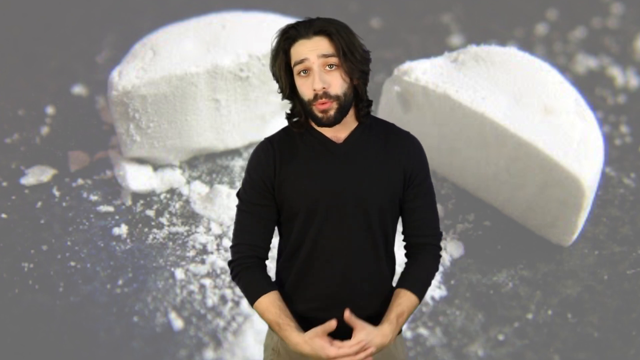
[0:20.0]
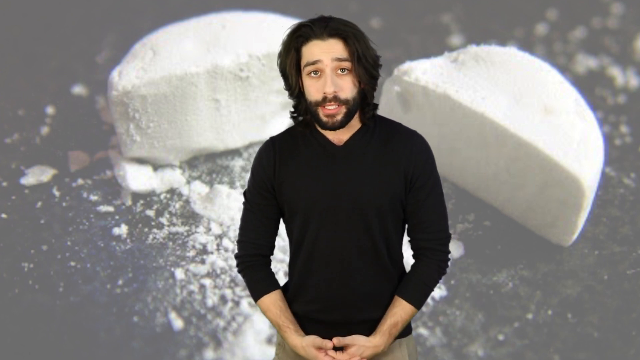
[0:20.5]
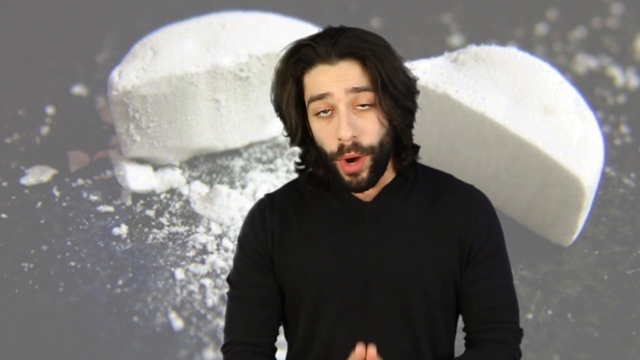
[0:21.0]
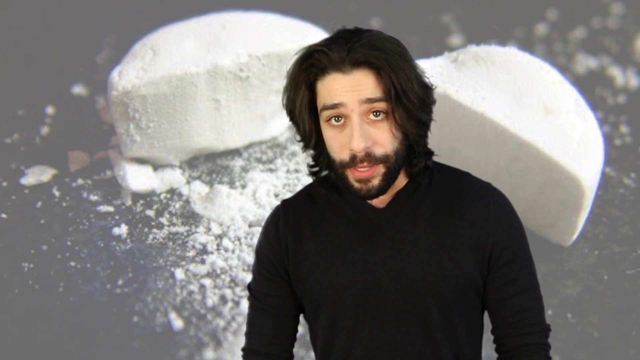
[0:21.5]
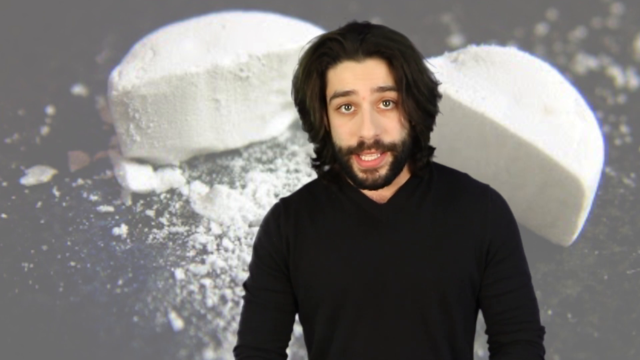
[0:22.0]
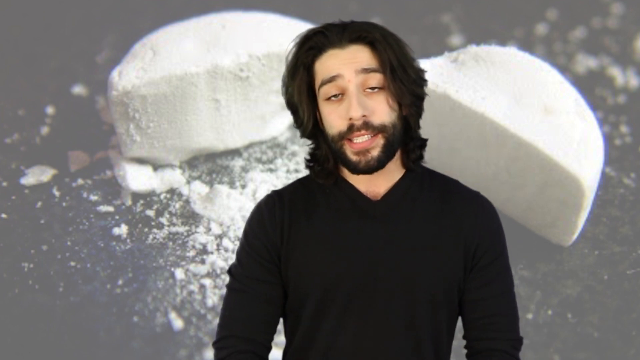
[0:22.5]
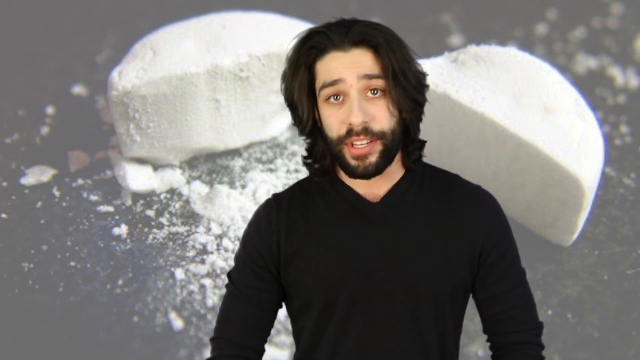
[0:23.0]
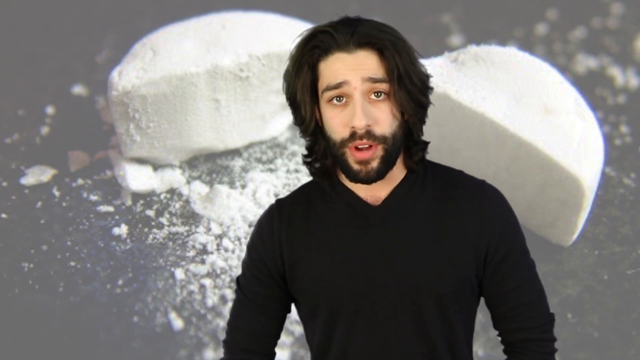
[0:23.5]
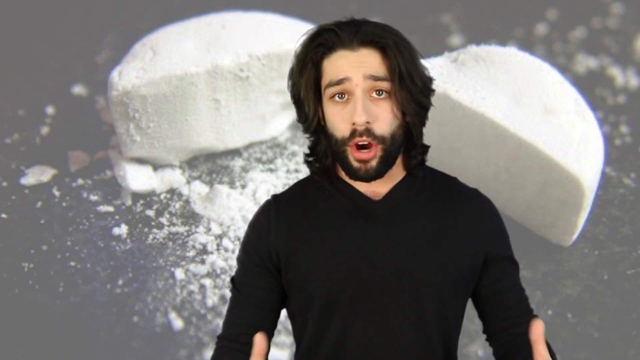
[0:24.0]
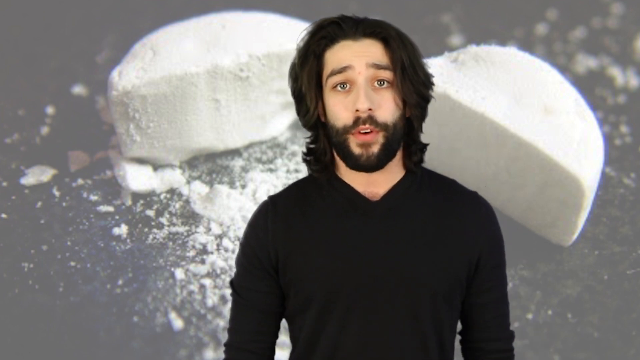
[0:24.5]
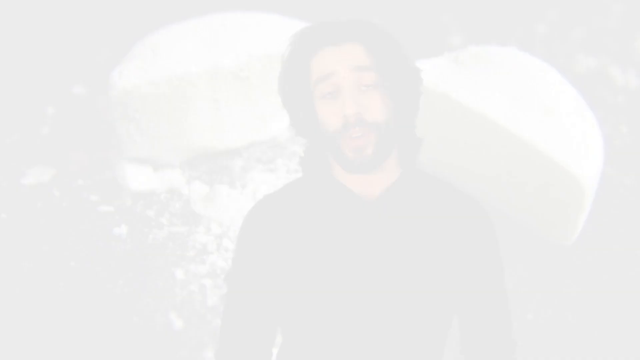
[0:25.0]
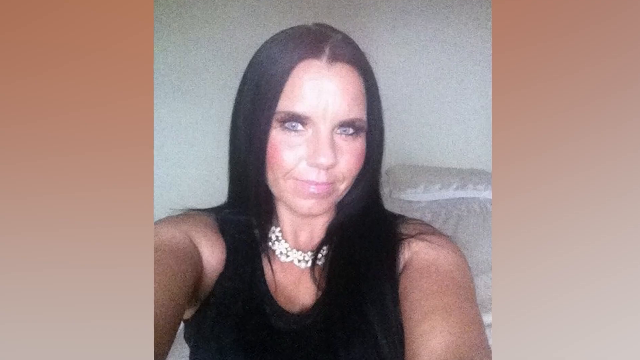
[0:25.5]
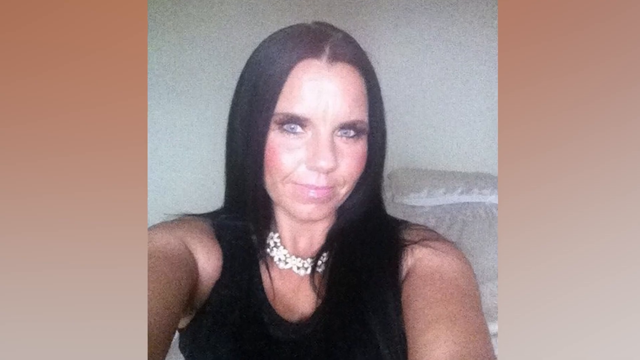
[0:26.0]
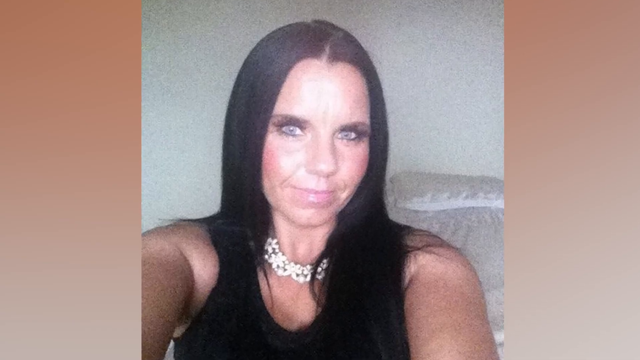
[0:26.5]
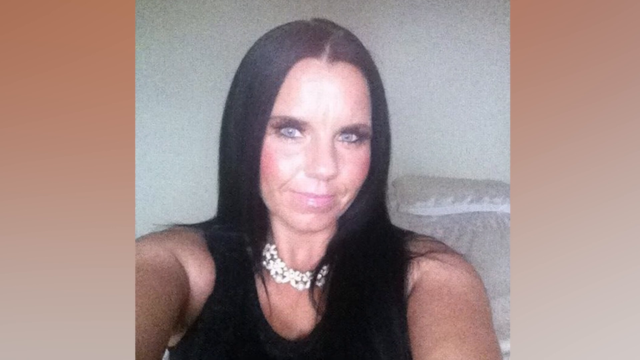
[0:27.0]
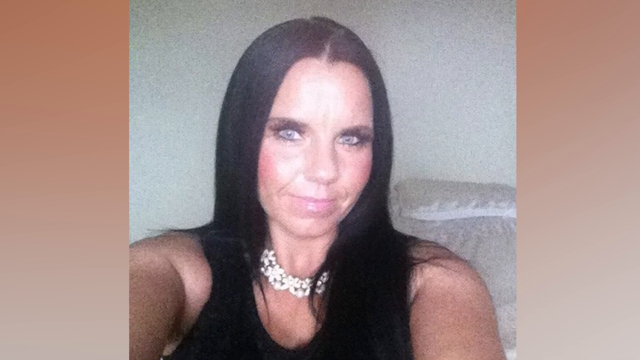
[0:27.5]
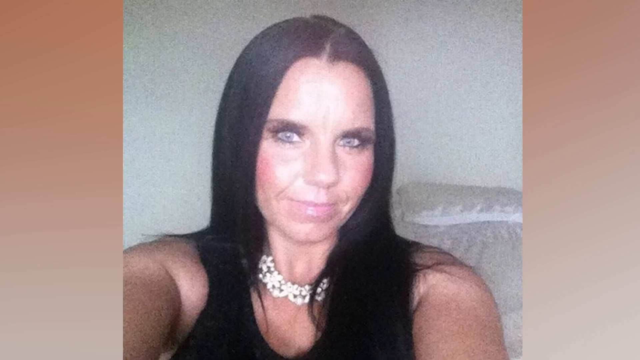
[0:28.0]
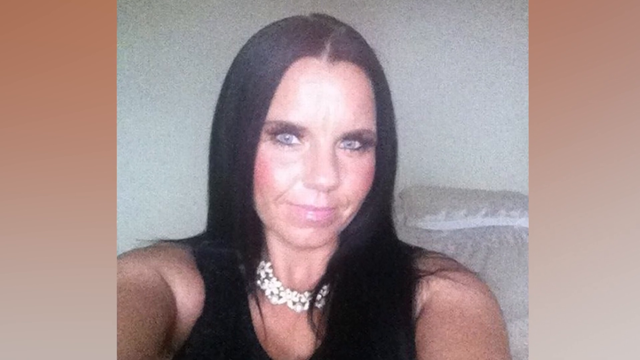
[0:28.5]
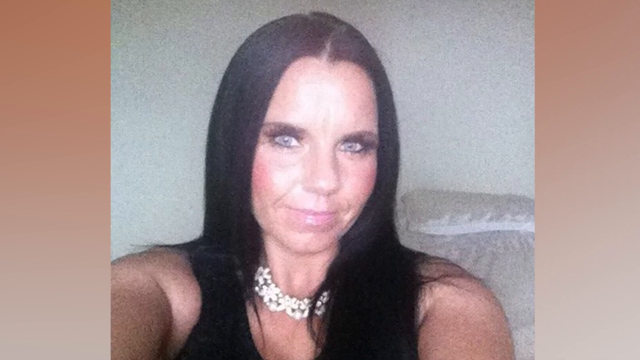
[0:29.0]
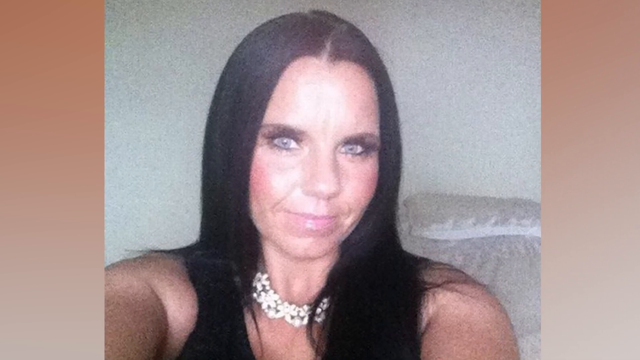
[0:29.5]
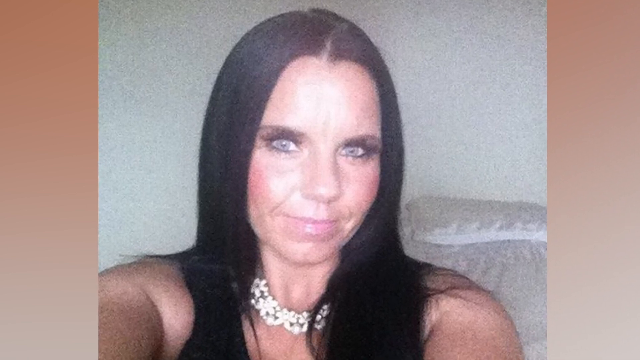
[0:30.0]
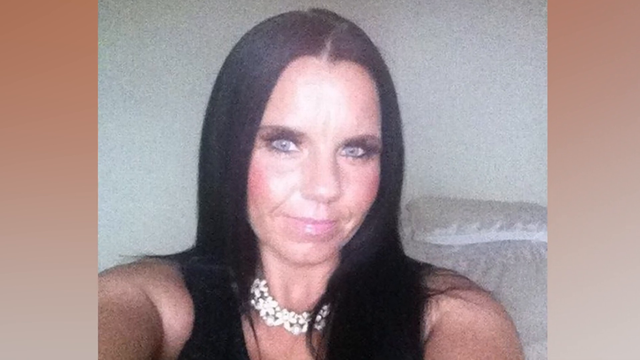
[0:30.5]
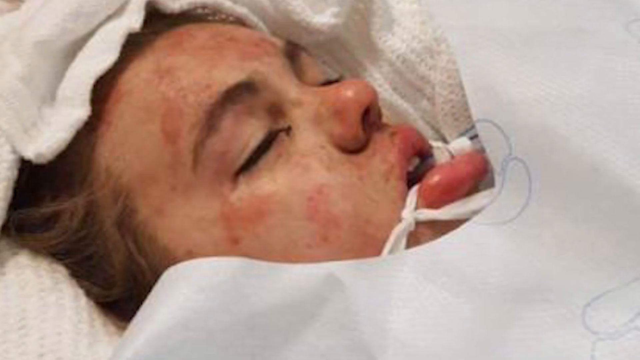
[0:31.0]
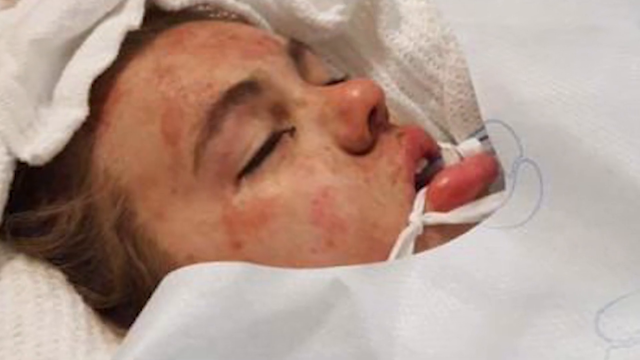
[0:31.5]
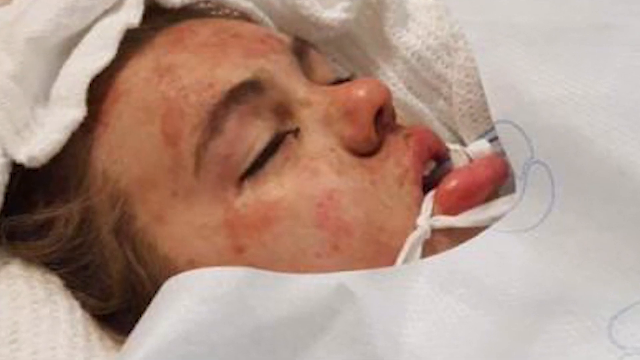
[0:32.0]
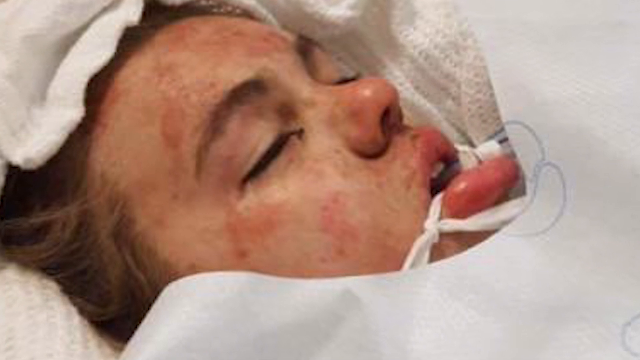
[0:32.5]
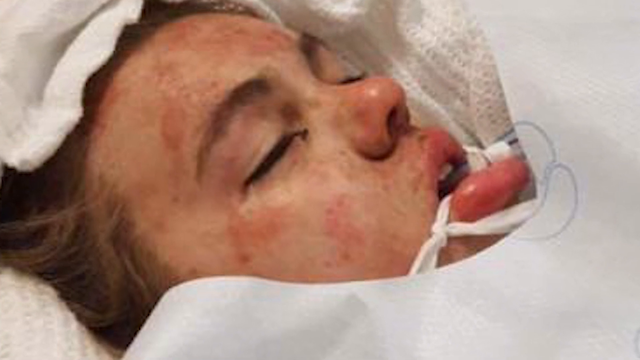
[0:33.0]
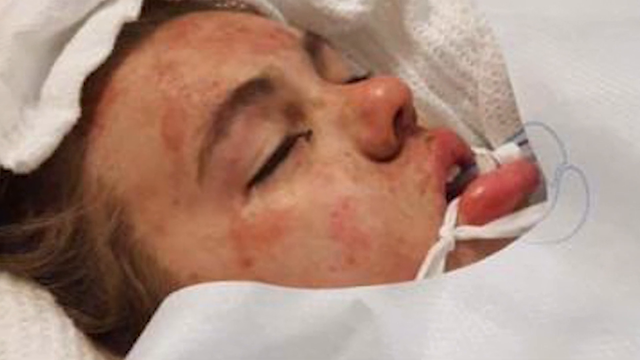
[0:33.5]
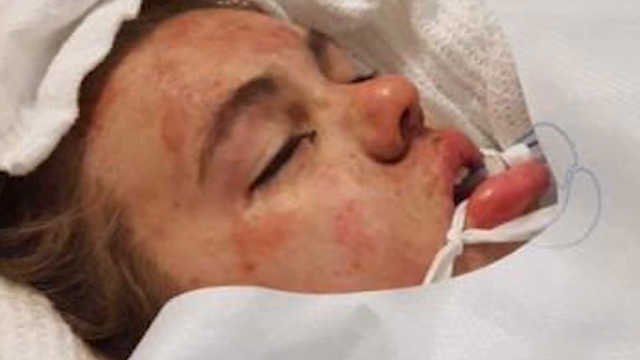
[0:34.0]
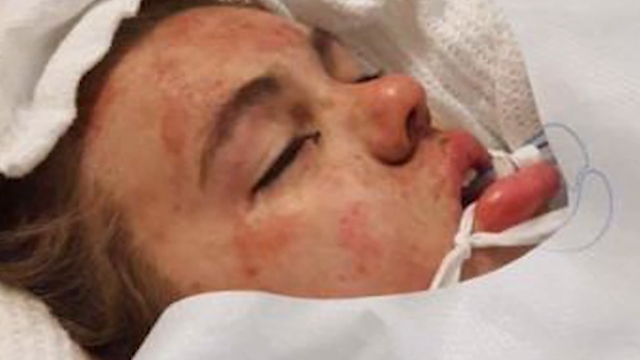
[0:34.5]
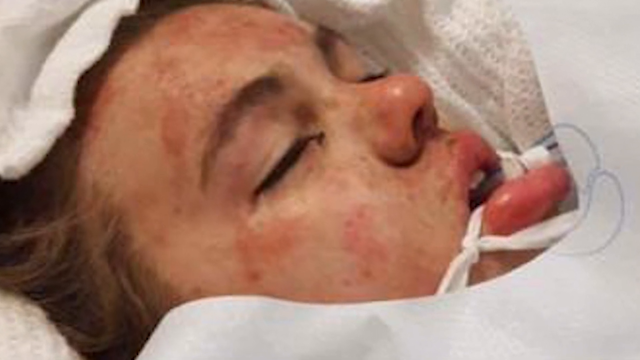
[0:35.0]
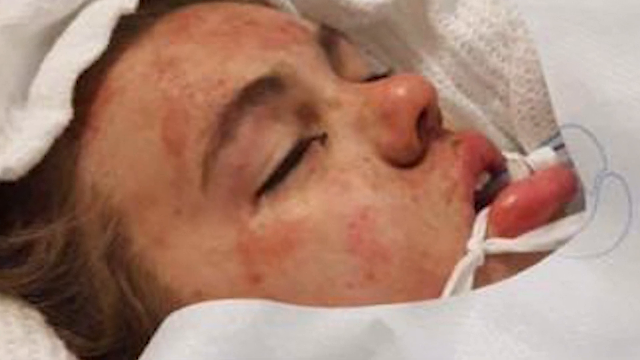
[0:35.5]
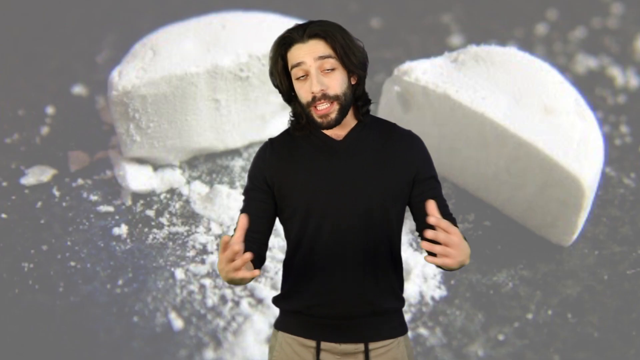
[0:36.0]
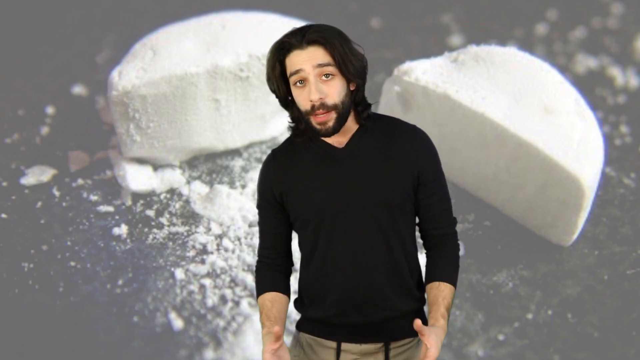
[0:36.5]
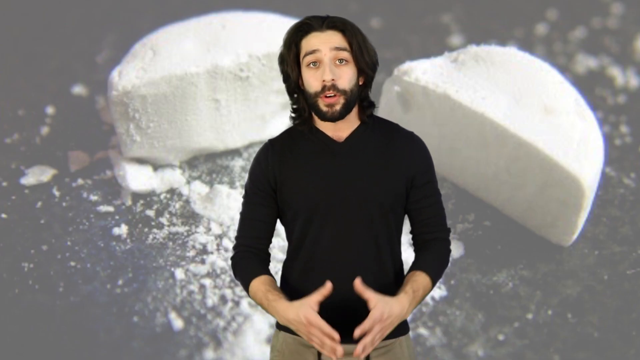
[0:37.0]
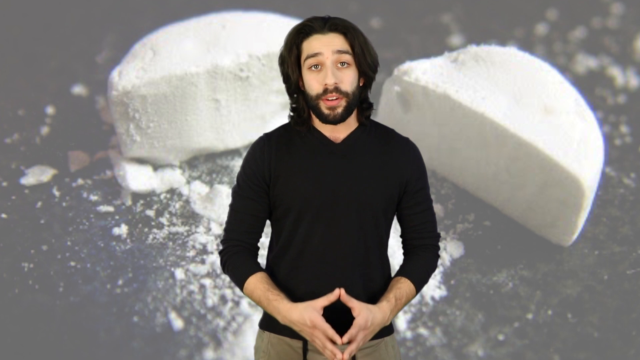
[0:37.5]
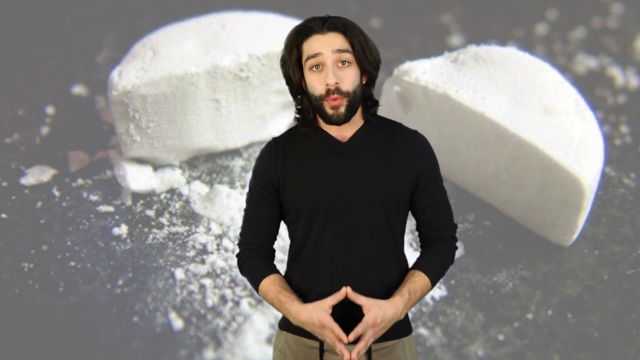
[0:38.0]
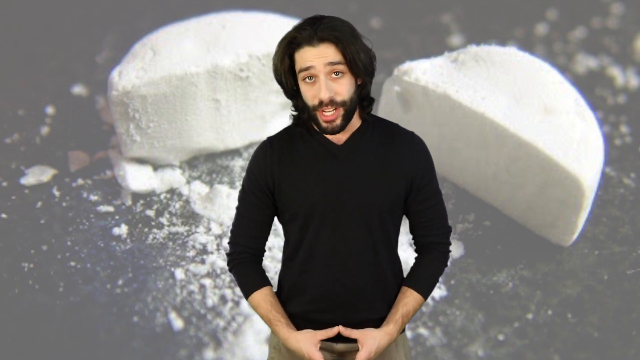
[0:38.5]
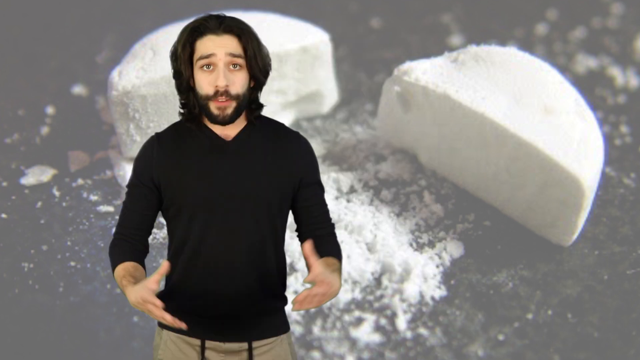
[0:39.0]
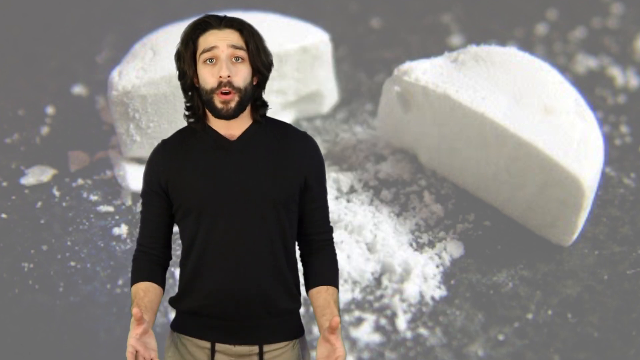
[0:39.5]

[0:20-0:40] The man is still standing in front of the same green screen with the pills cut in half. He shows a photo of a woman who is perfectly fine, taking a selfie; she looks like she has gotten ready to go somewhere and looks particularly made up and pretty. The video then cuts to the earlier photo of the woman in the hospital bed, possibly comparing the two photos. The two photos could possibly be of the same person, but it is not easy to tell because of the hospitalized woman's bad state. The man, named Jared or Jacob, continues narrating. He wears a long-sleeve black v-neck shirt or sweater and has long hair and a lot of facial hair.